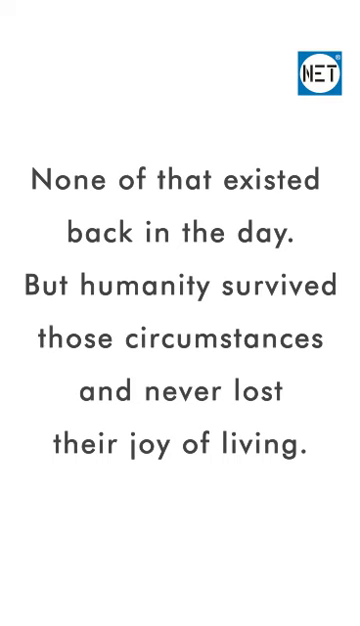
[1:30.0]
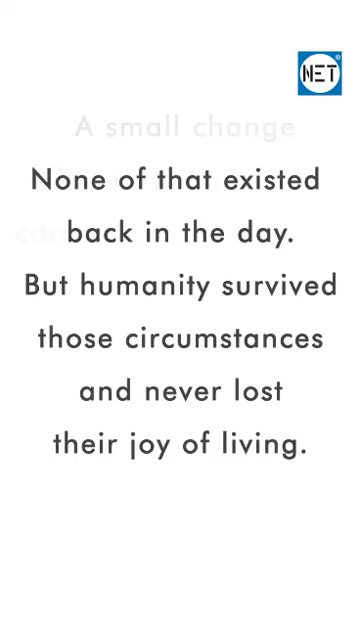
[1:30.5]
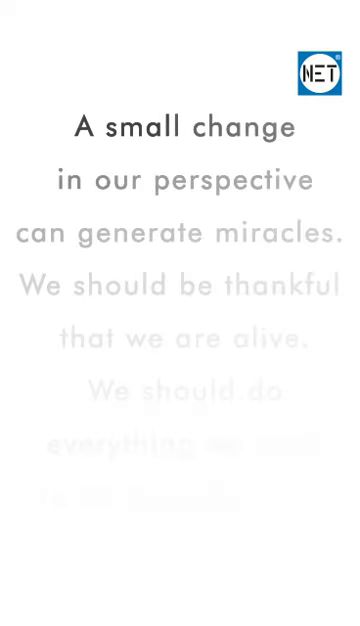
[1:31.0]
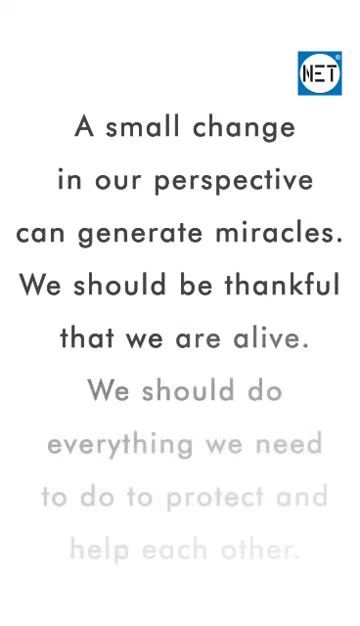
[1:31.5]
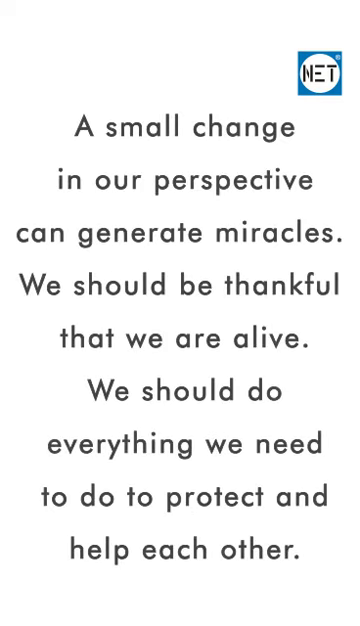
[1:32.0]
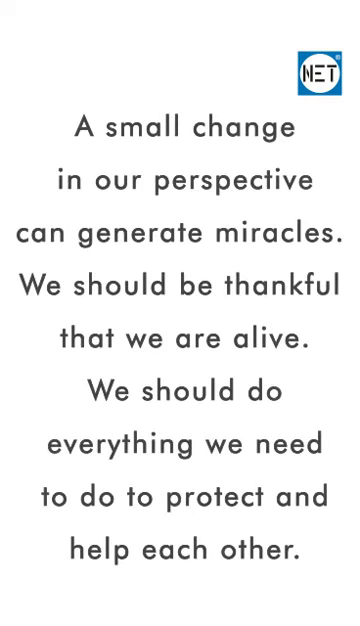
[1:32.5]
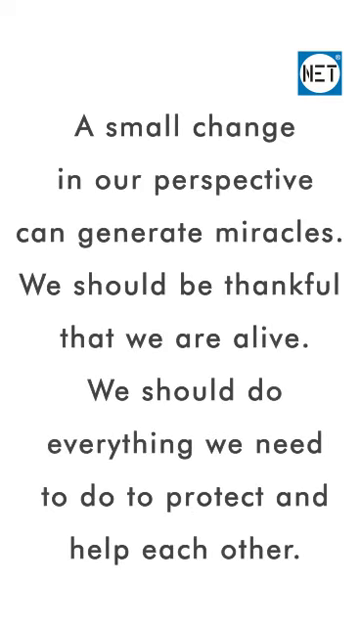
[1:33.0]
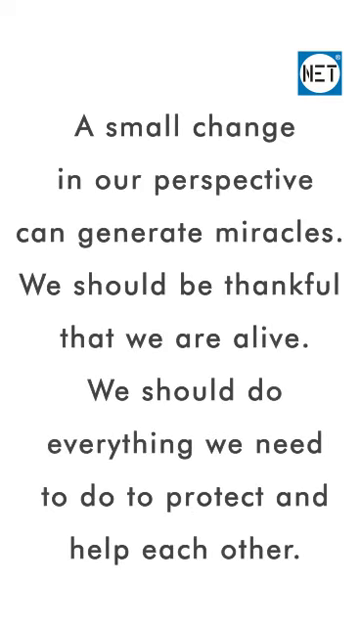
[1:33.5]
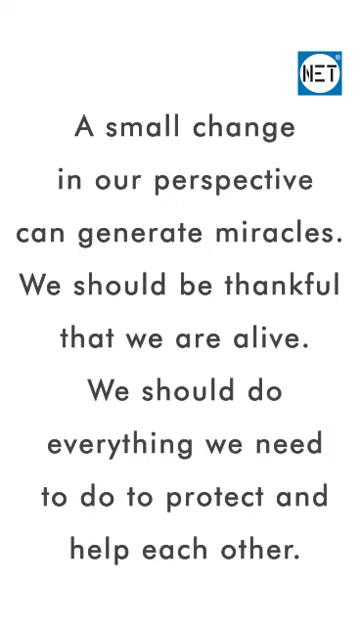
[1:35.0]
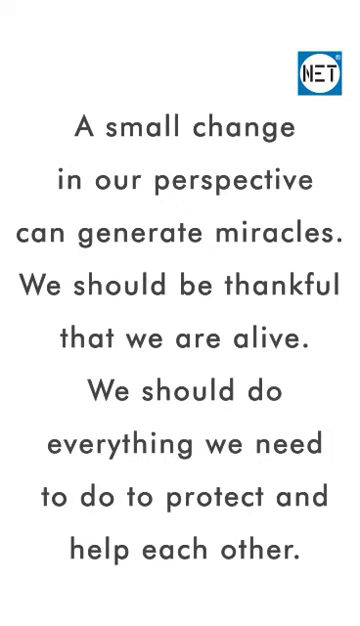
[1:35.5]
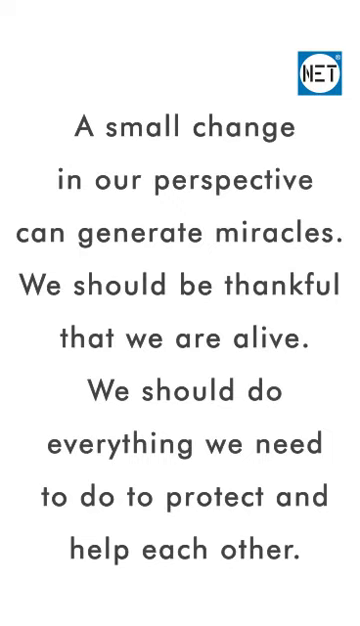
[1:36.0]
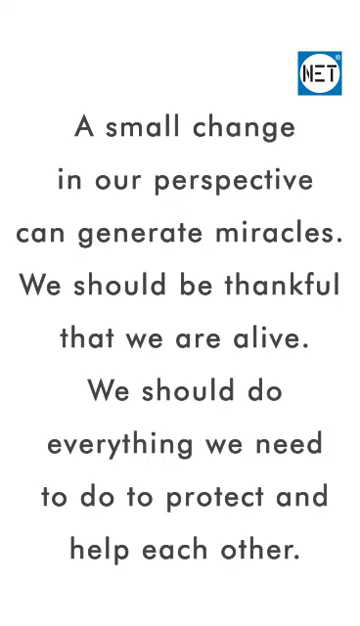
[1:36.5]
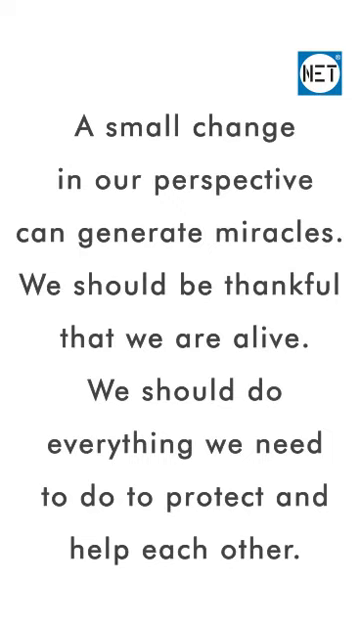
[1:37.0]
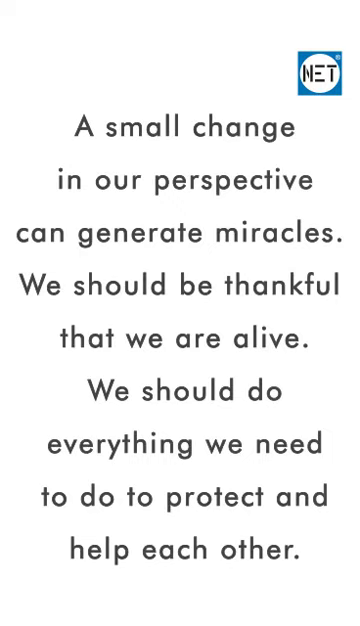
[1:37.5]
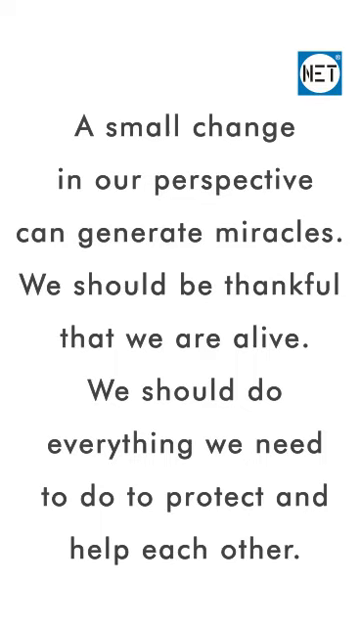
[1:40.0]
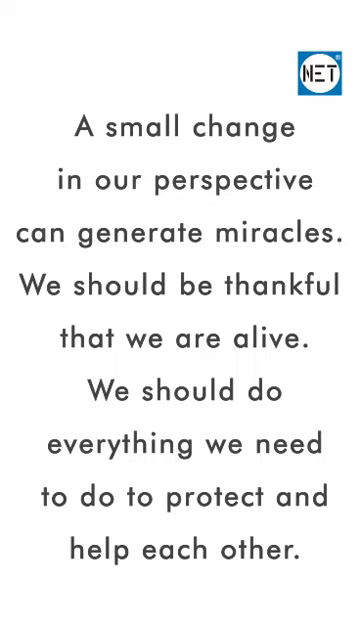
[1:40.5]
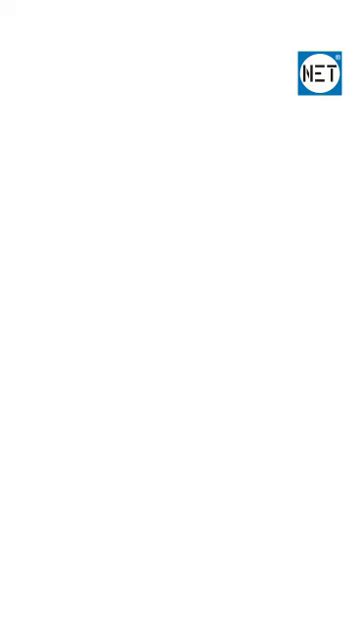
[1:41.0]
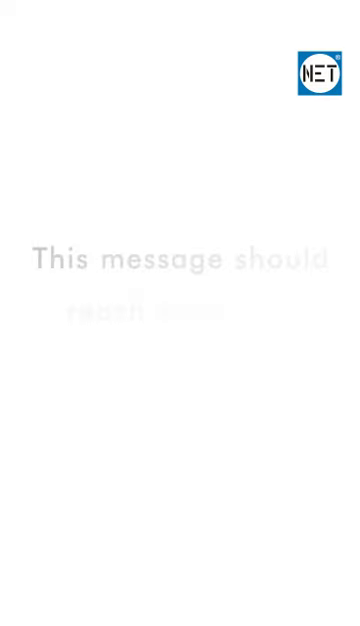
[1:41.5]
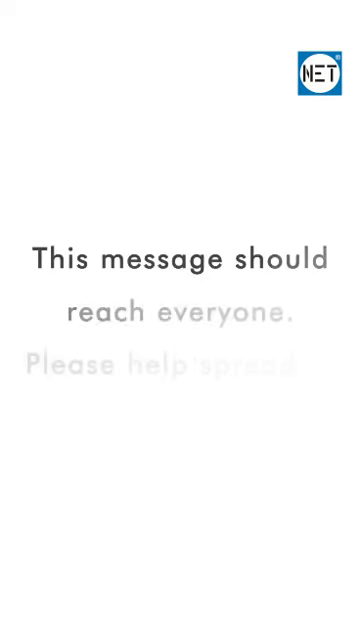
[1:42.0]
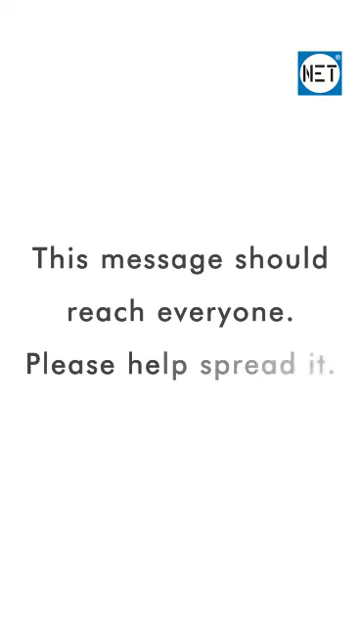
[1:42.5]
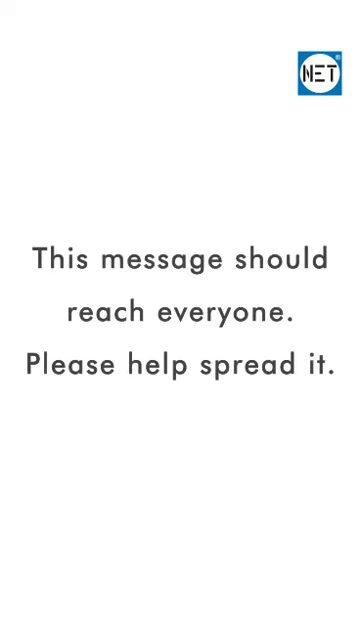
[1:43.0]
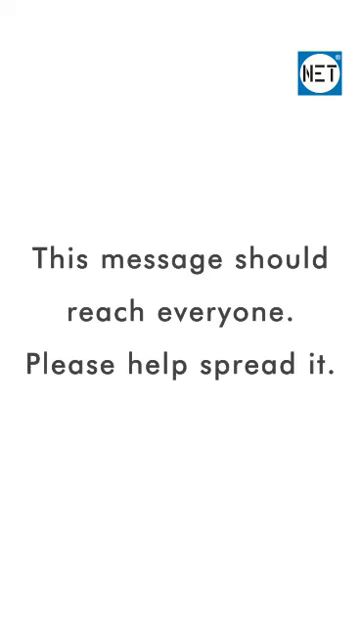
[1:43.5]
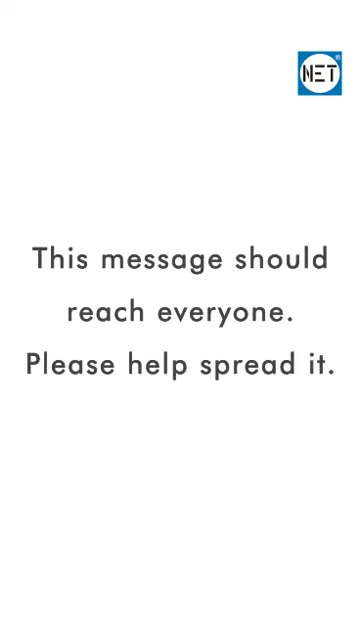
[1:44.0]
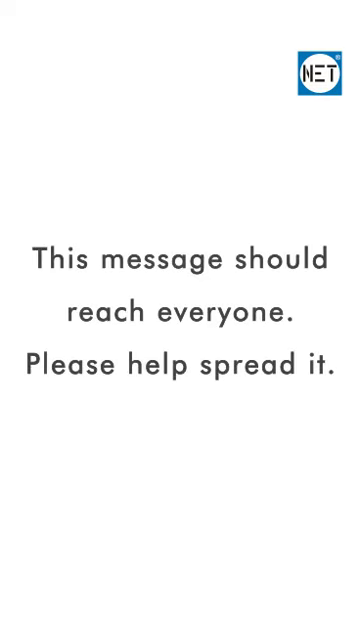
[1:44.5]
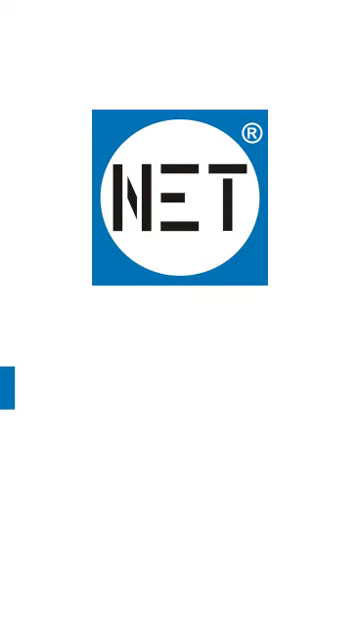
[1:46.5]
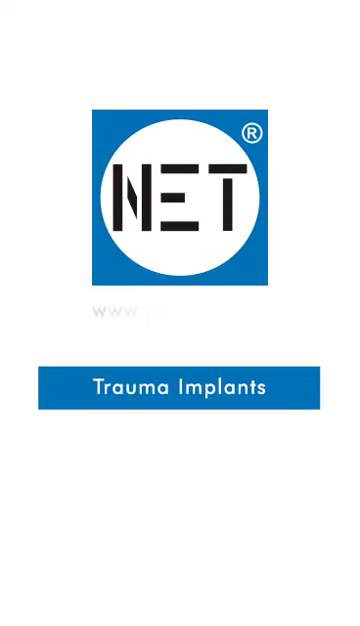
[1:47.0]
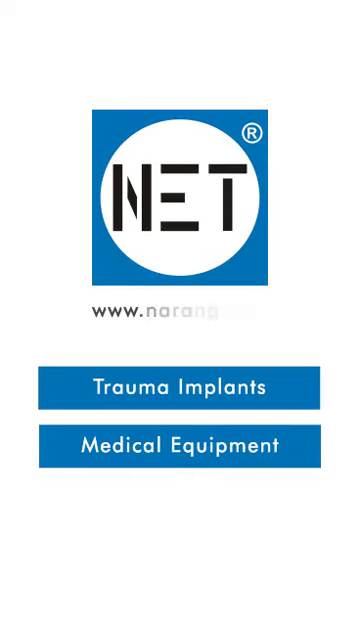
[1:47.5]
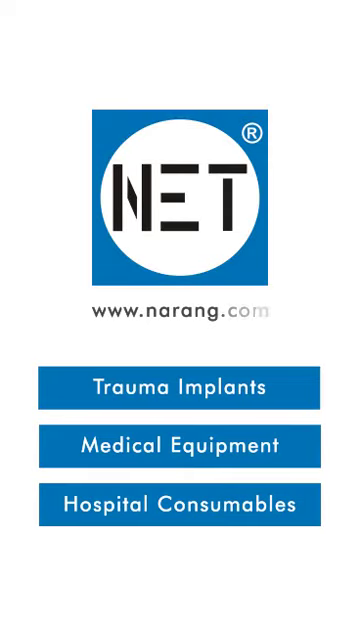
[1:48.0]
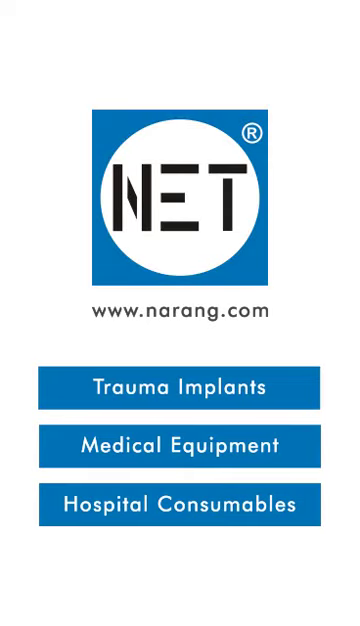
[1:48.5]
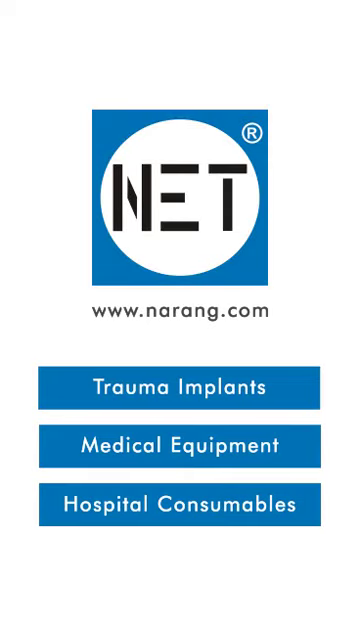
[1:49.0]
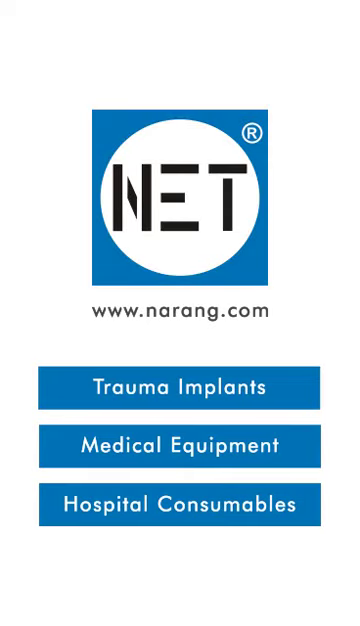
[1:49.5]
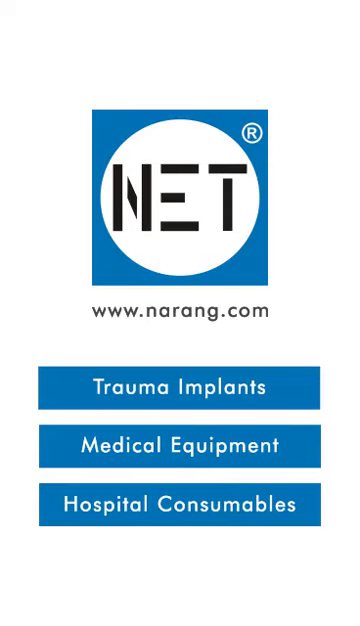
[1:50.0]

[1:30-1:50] The closing part continues the message that people should be grateful for what they have, since earlier generations did not have these things and still thrived and enjoyed life. The video ends by showing the program that made it, called NET, with the address "www.nerang.com", followed by a call to action asking viewers to spread the word and share the video as widely as possible.